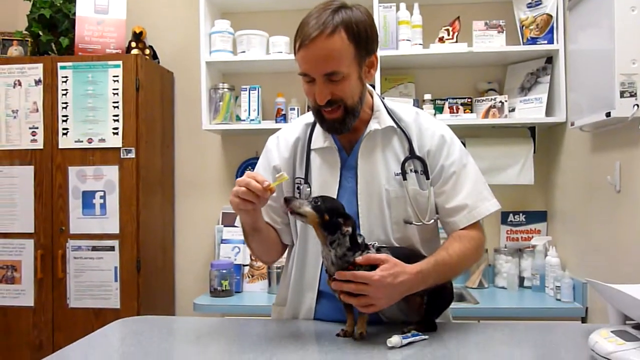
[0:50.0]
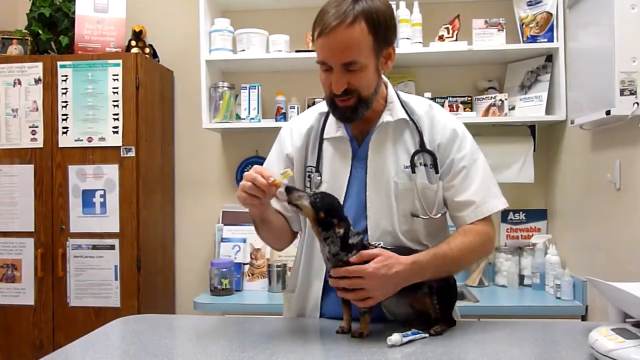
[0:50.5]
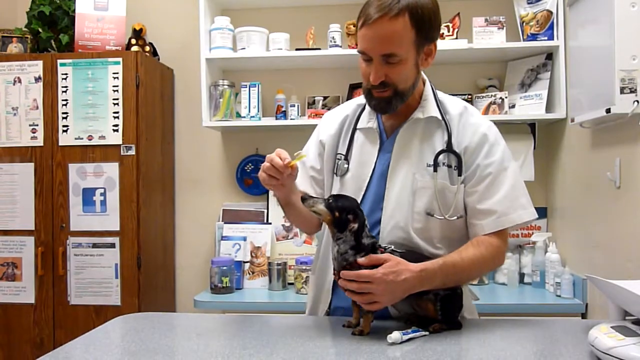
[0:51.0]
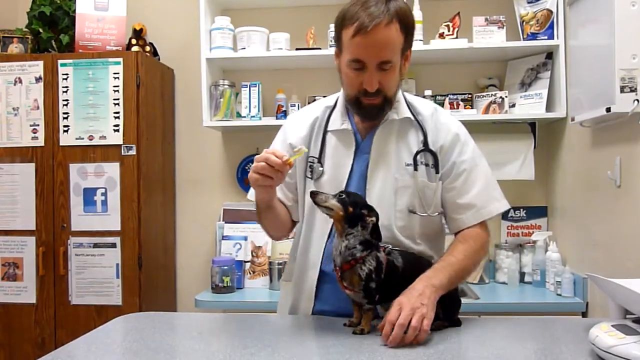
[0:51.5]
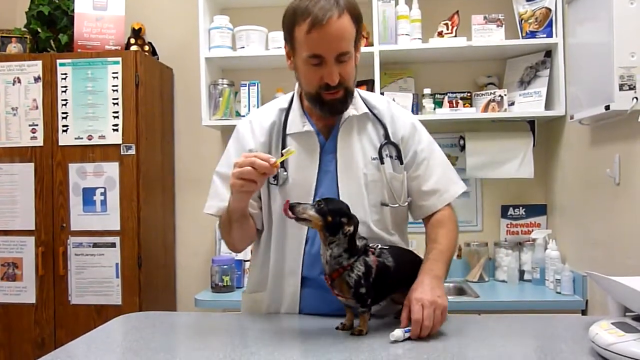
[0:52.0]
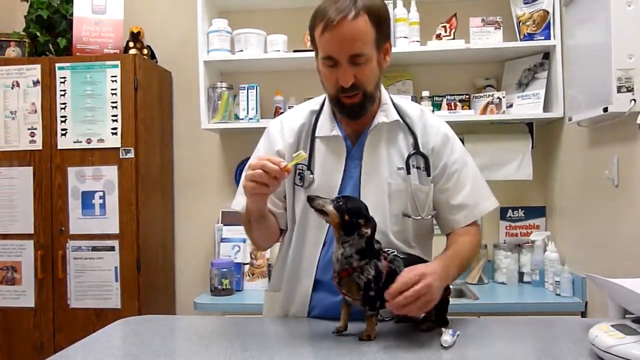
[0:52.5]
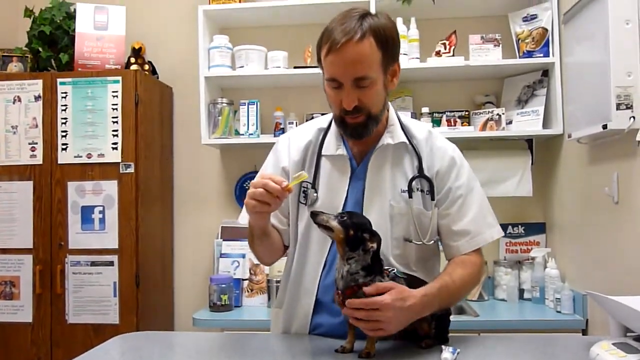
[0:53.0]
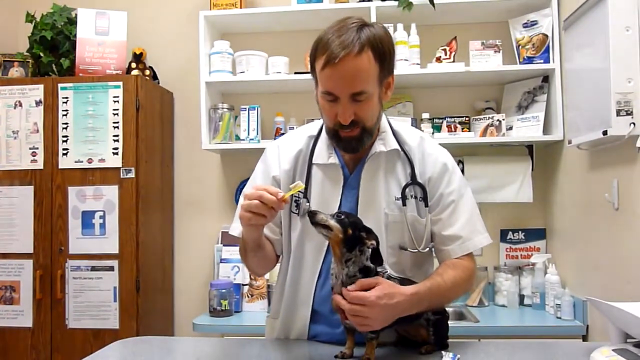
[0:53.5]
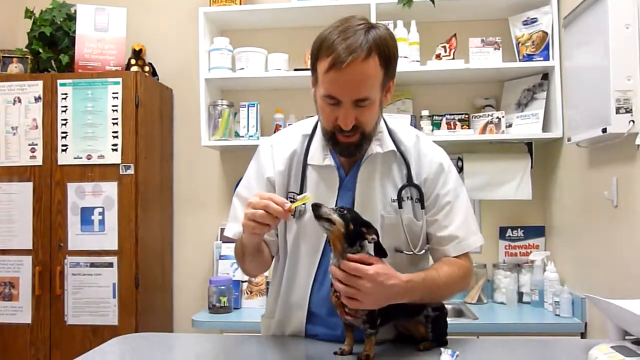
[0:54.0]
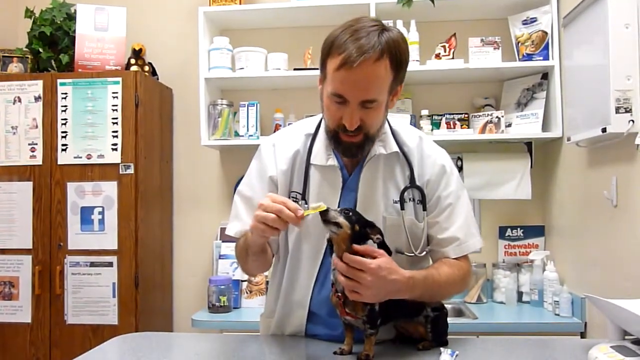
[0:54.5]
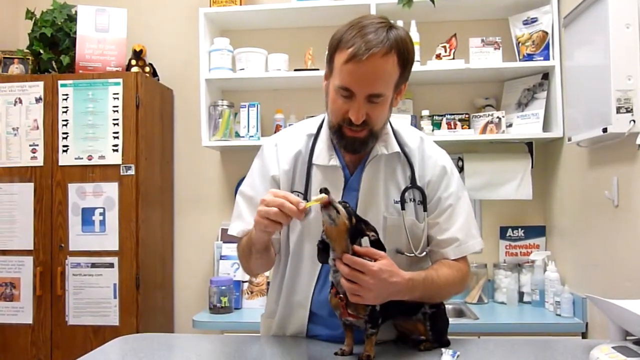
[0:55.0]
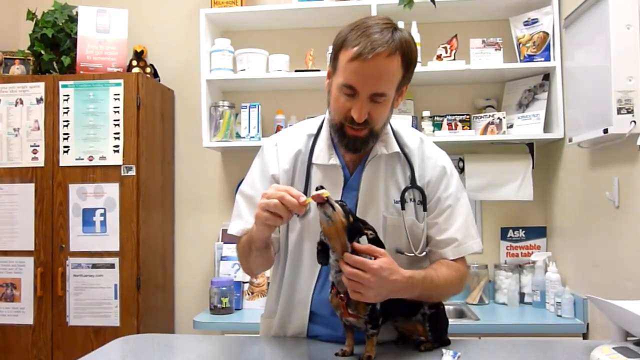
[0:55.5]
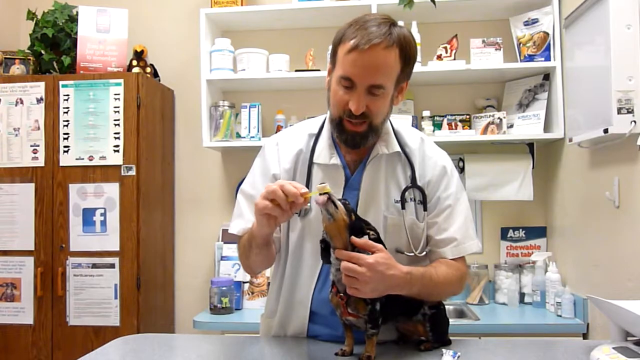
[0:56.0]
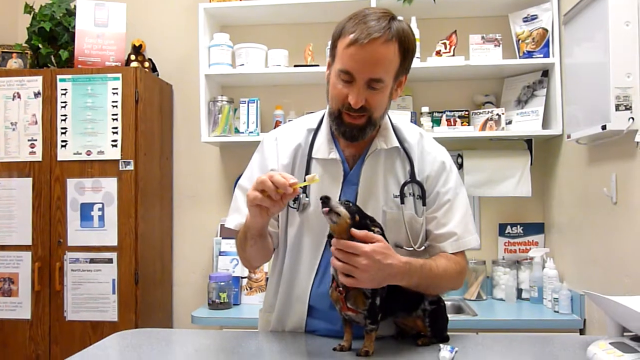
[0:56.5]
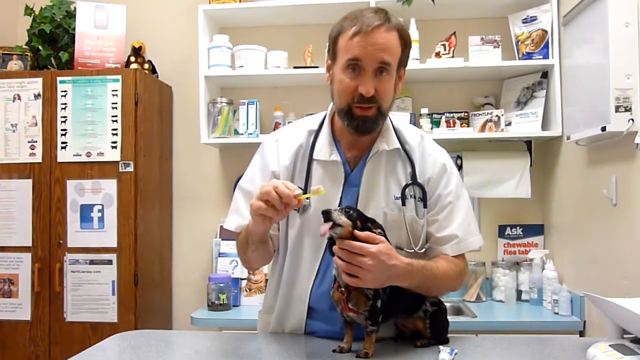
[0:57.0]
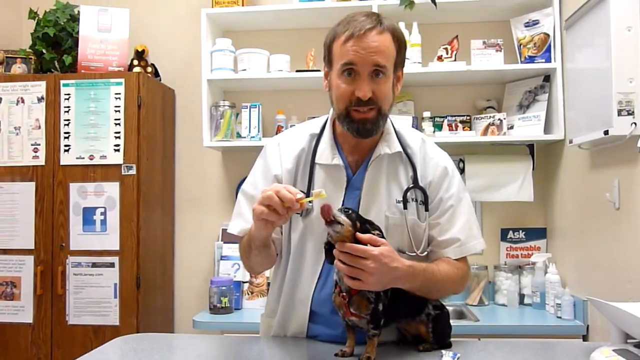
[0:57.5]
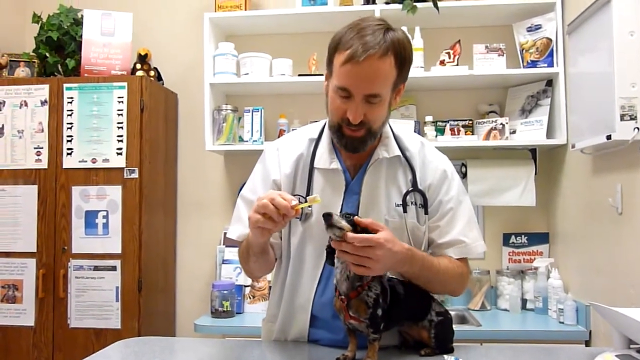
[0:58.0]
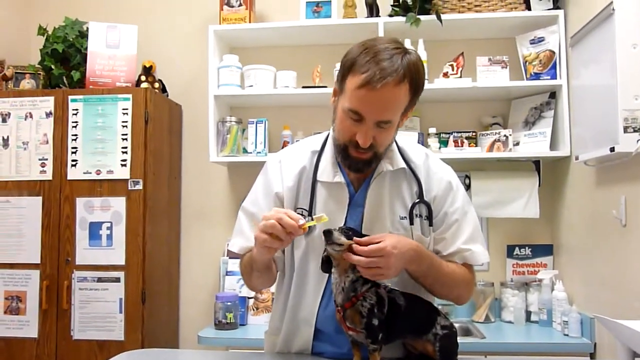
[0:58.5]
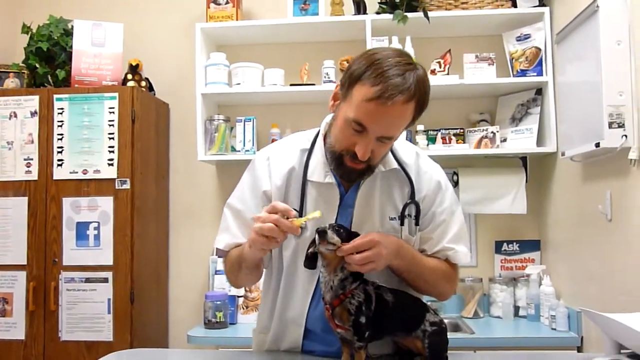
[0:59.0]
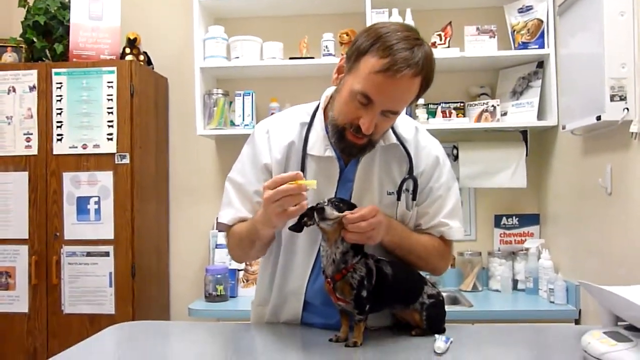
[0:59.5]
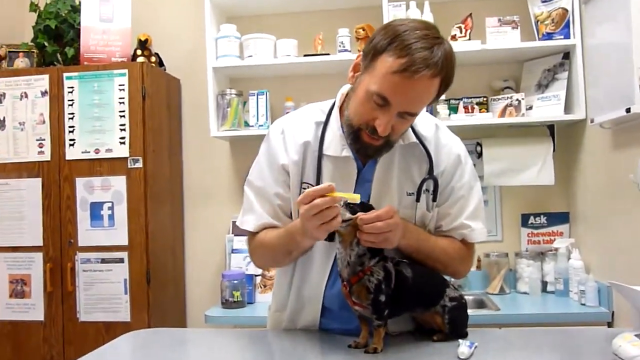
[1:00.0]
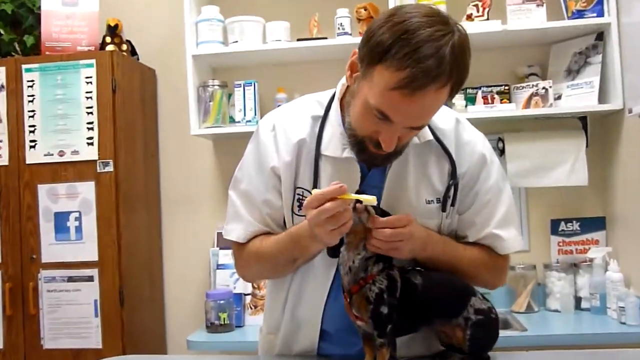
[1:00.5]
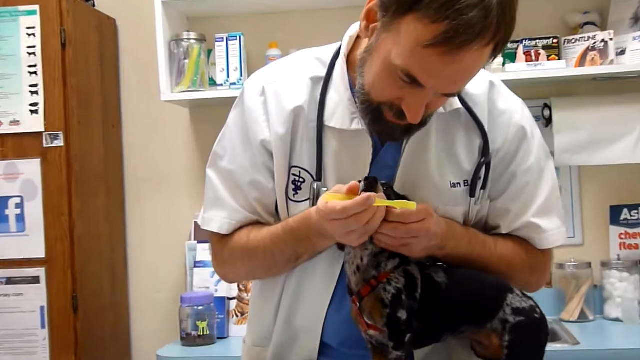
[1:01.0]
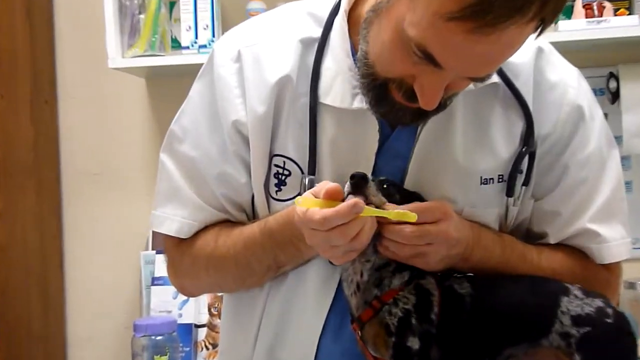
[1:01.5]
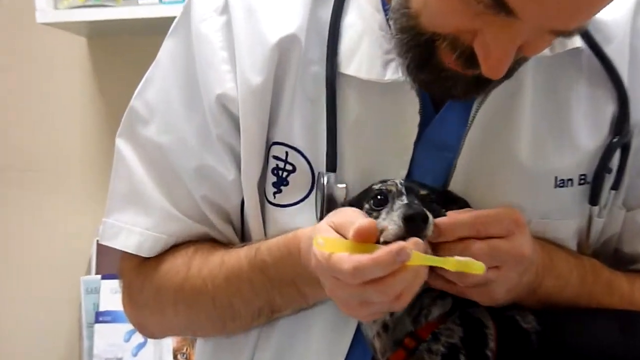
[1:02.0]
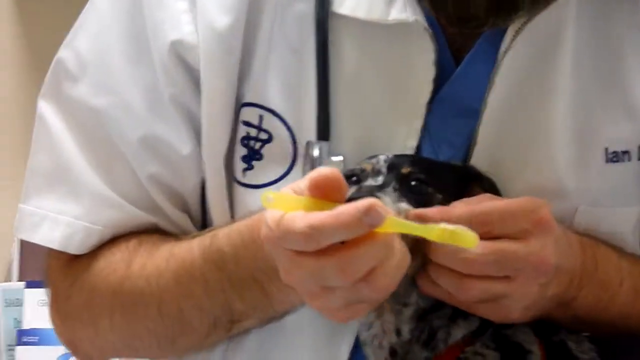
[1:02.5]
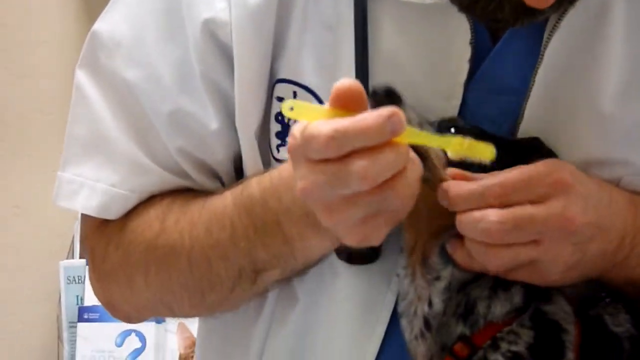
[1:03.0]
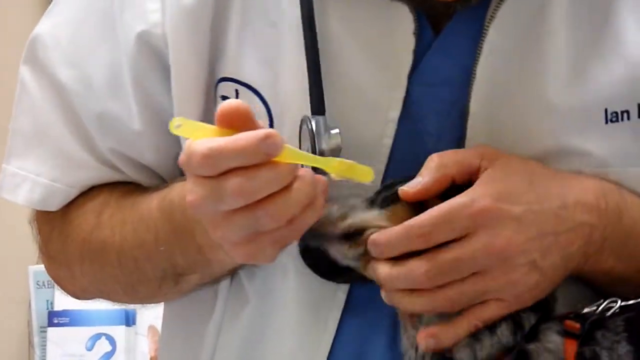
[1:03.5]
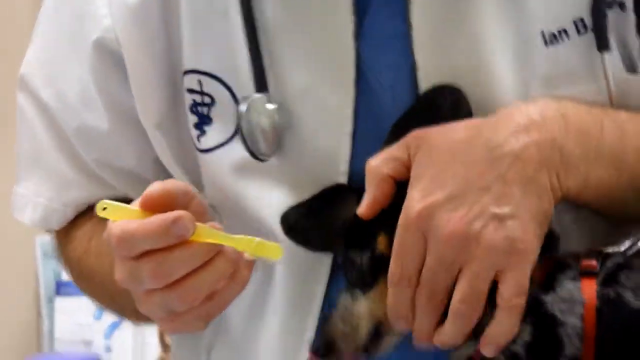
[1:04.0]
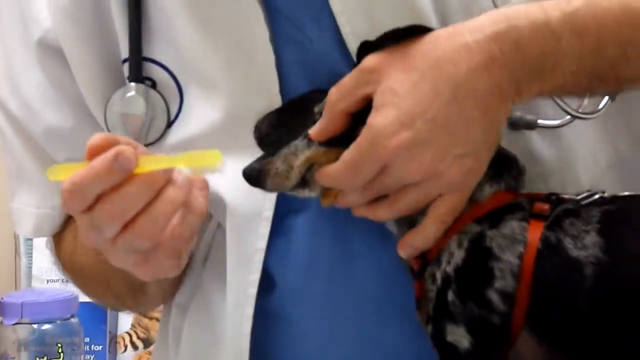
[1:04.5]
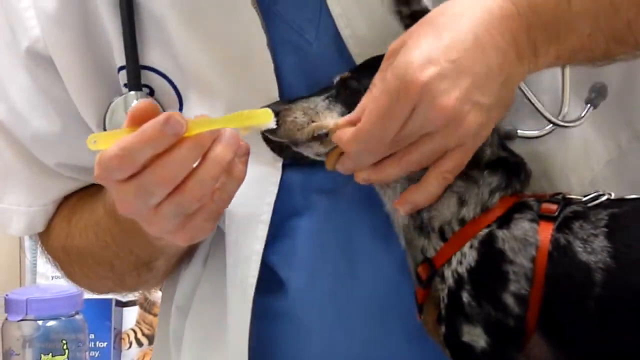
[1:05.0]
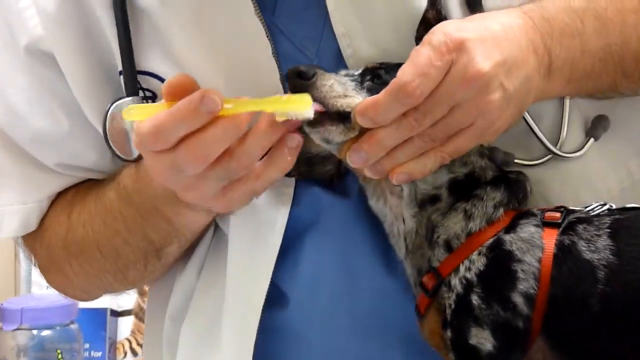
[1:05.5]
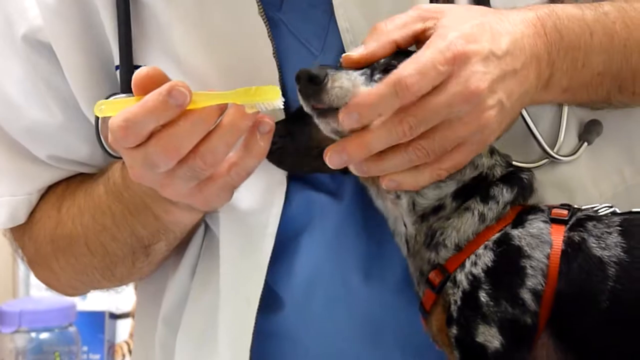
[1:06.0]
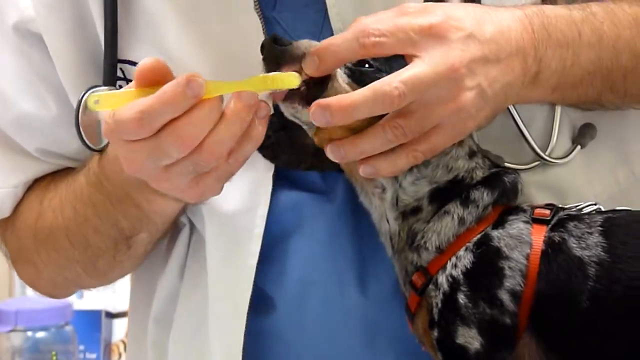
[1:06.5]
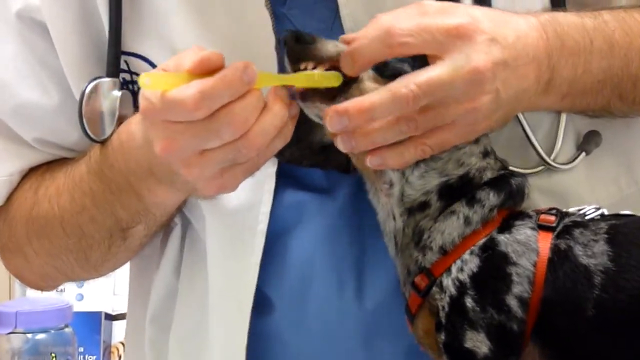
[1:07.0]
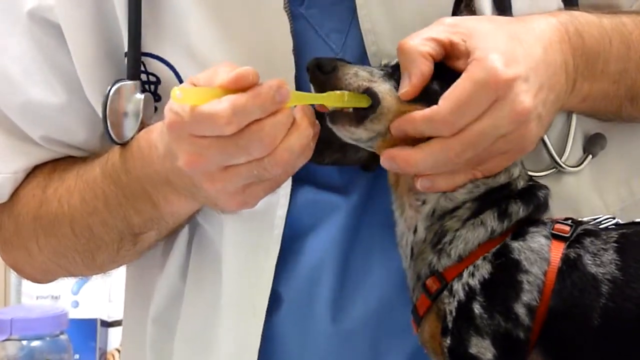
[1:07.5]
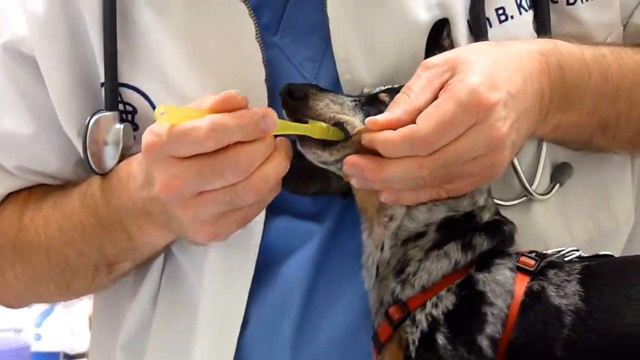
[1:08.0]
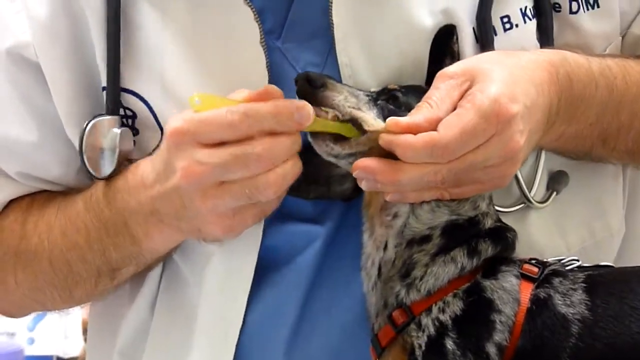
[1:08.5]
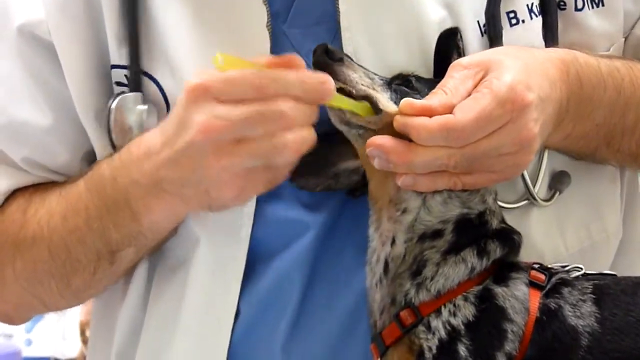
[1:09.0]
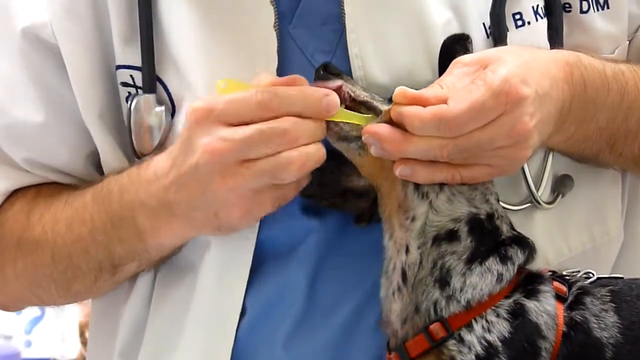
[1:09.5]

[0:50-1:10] The vet smiles as he prepares to brush the dog's teeth, not yet having put the toothbrush in the dog's mouth. He grabs the dog a little more tightly around the neck and works his hands toward the dog's mouth, then carefully opens the mouth by lifting the dog's lip and begins brushing the teeth back and forth horizontally. The dog, wearing a red harness, keeps licking the toothbrush quickly. The vet backs up a little, letting the dog continue to enjoy the brushing, and then vigorously brushes the left side of the dog's teeth. The vet and the dog both appear to be enjoying the experience.